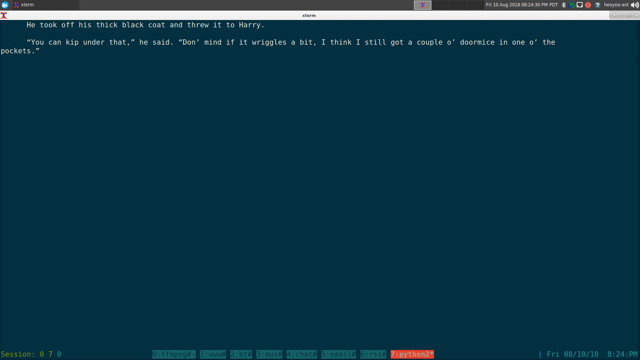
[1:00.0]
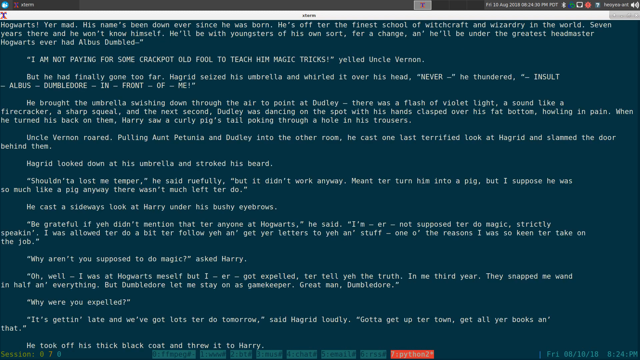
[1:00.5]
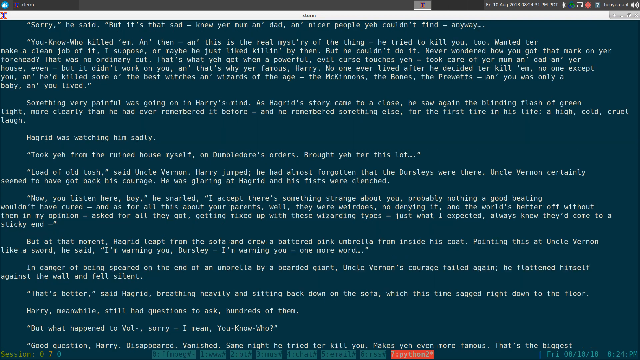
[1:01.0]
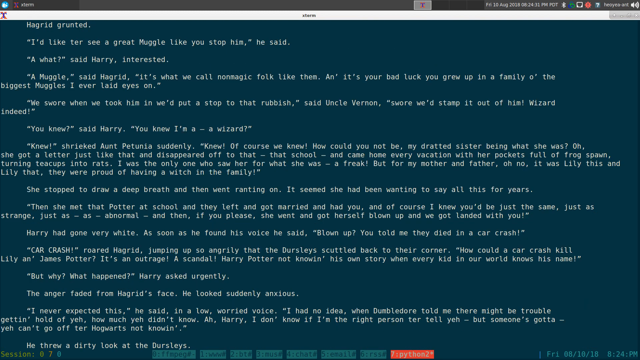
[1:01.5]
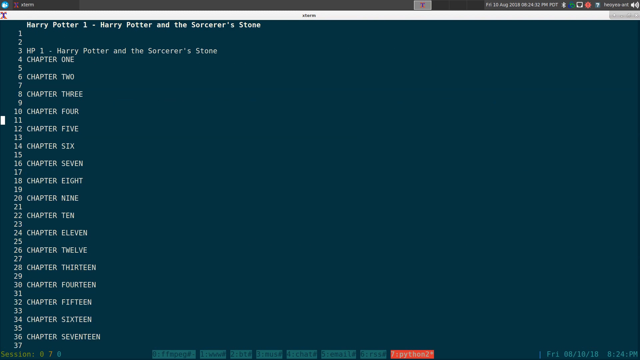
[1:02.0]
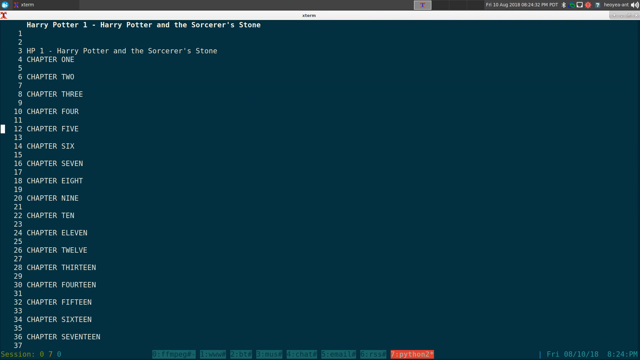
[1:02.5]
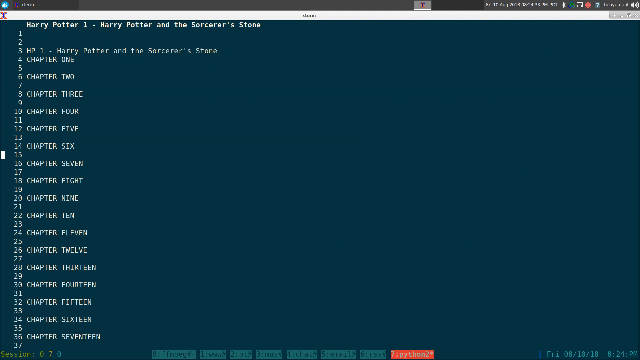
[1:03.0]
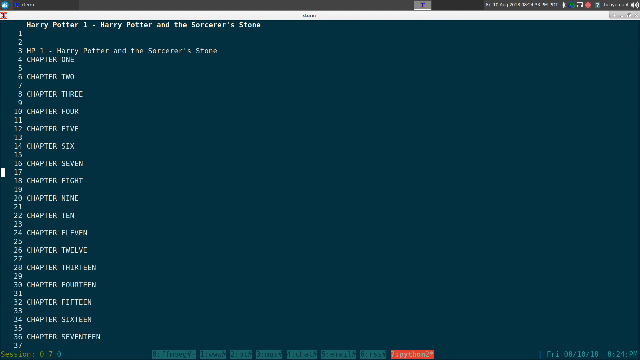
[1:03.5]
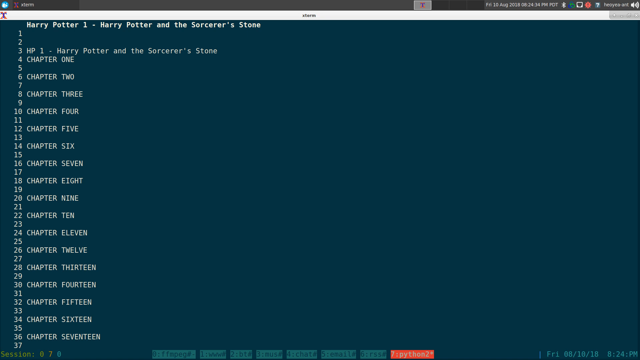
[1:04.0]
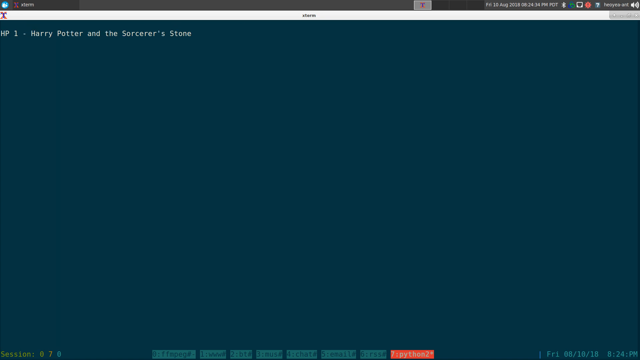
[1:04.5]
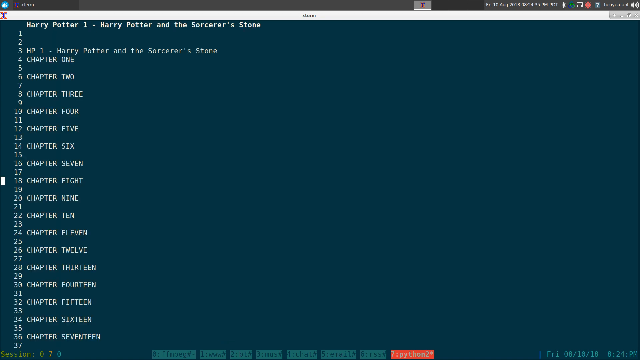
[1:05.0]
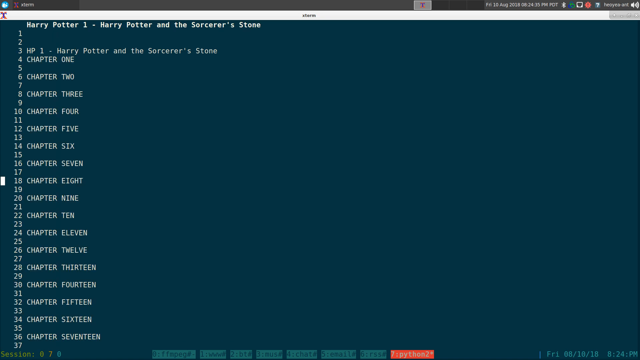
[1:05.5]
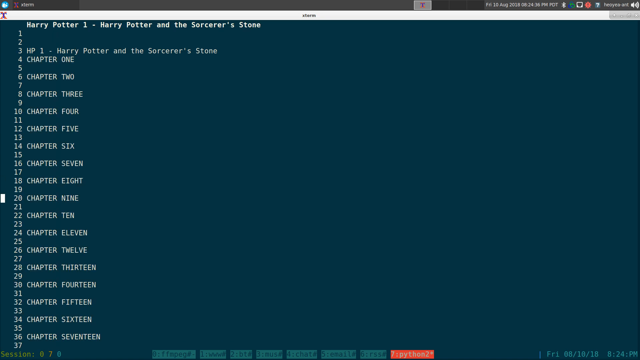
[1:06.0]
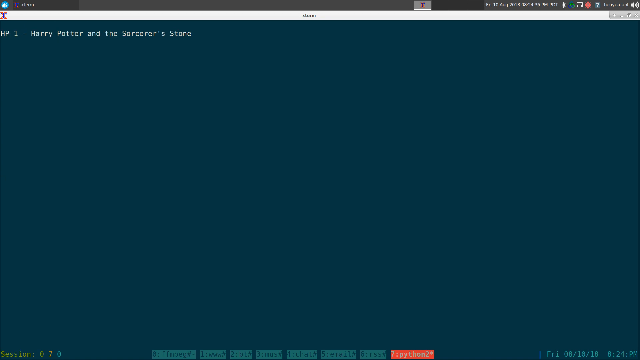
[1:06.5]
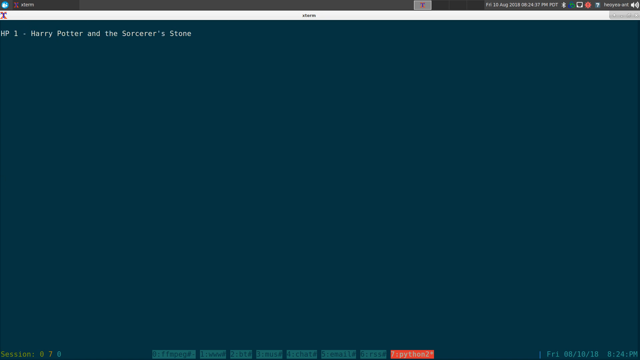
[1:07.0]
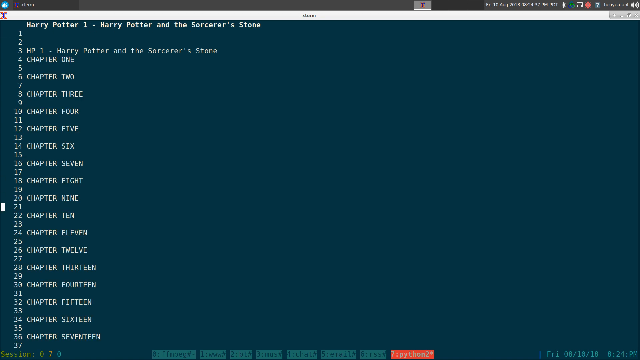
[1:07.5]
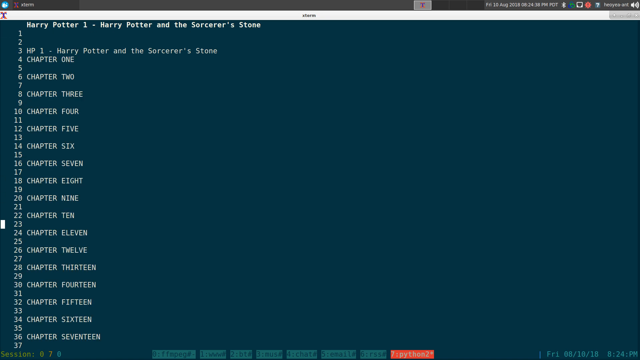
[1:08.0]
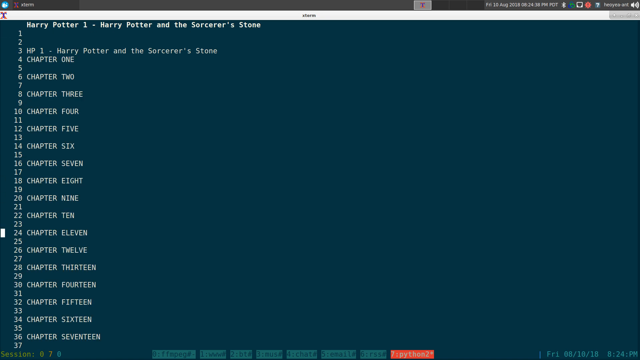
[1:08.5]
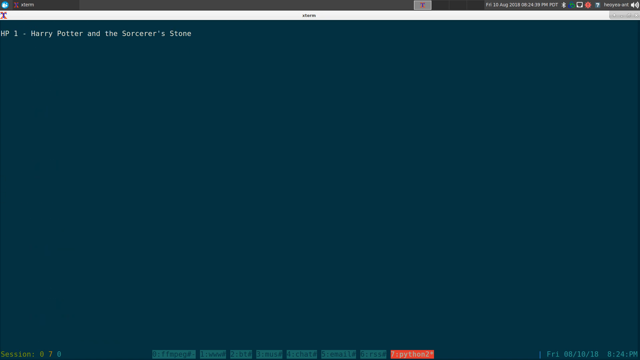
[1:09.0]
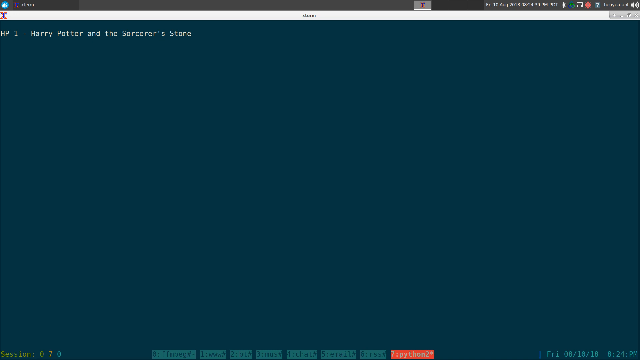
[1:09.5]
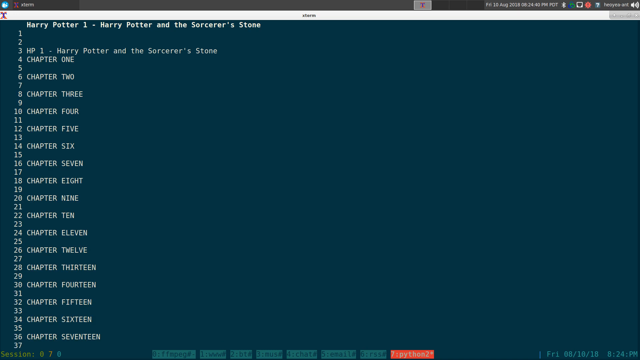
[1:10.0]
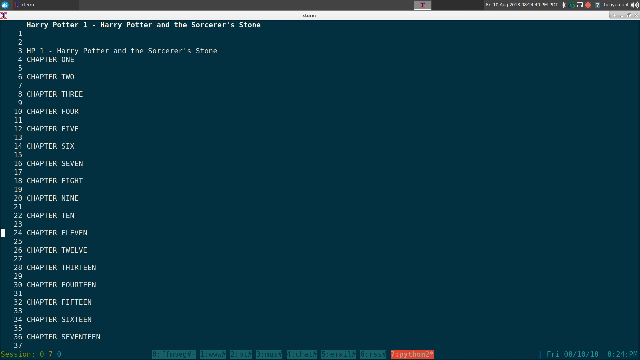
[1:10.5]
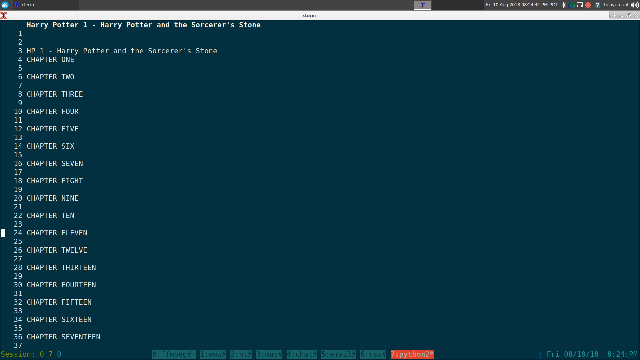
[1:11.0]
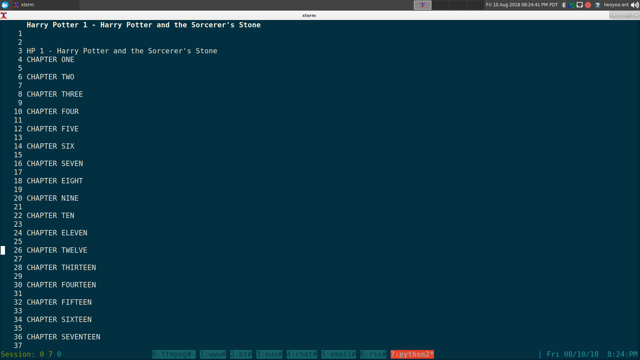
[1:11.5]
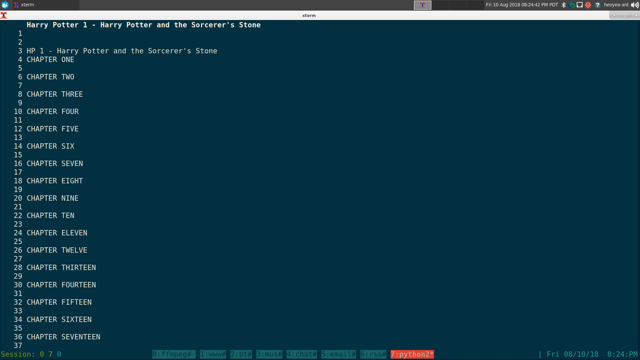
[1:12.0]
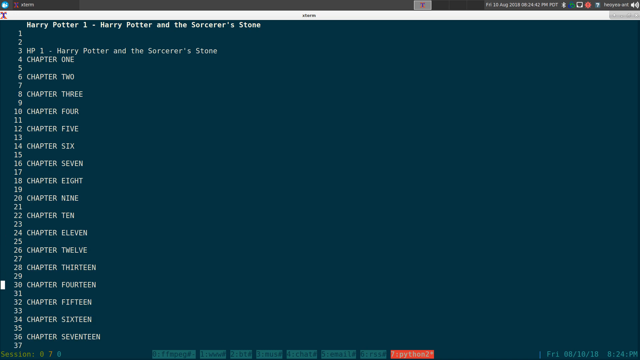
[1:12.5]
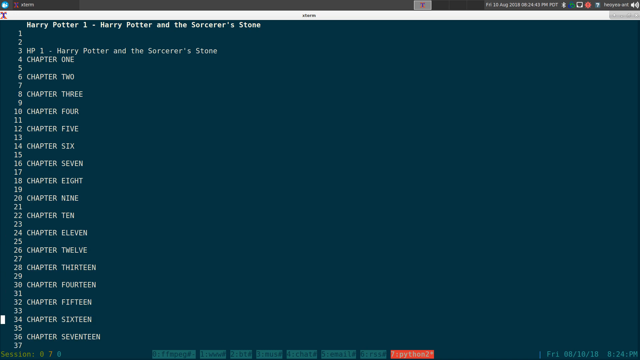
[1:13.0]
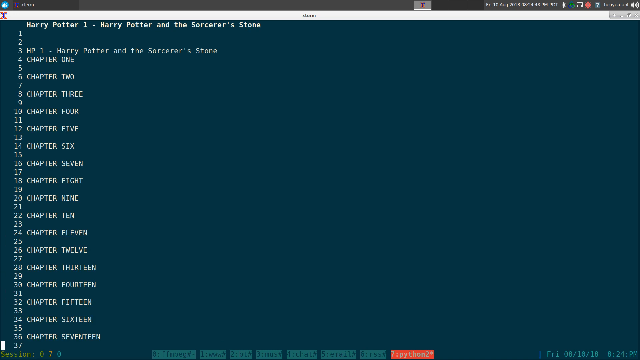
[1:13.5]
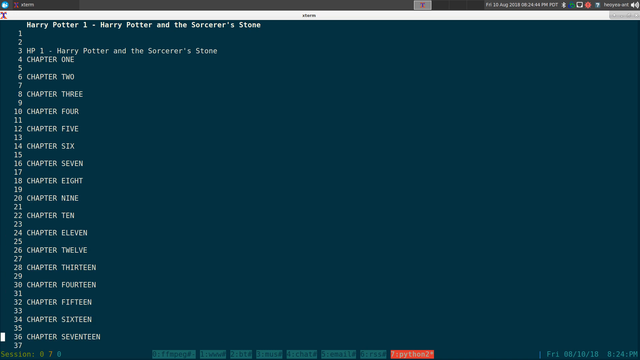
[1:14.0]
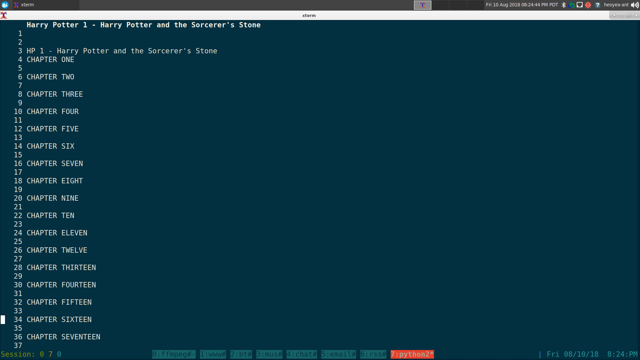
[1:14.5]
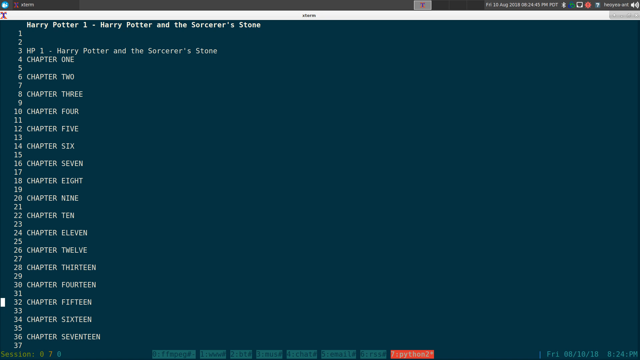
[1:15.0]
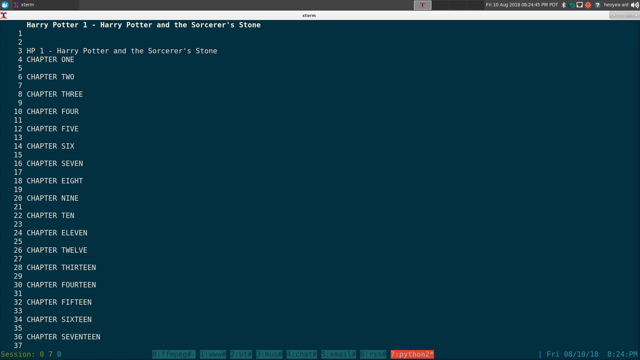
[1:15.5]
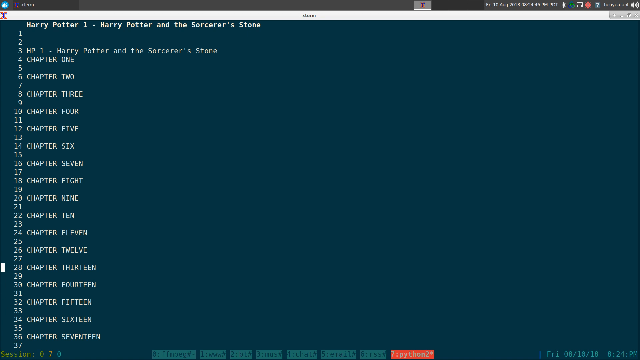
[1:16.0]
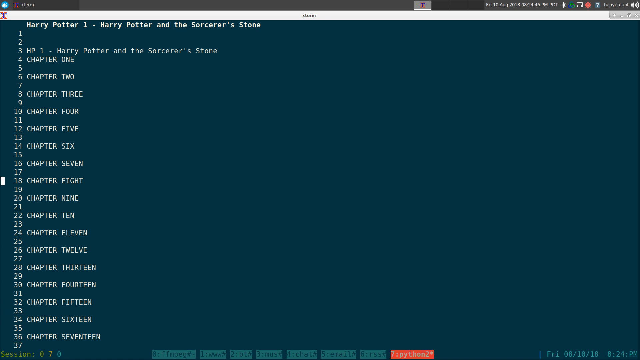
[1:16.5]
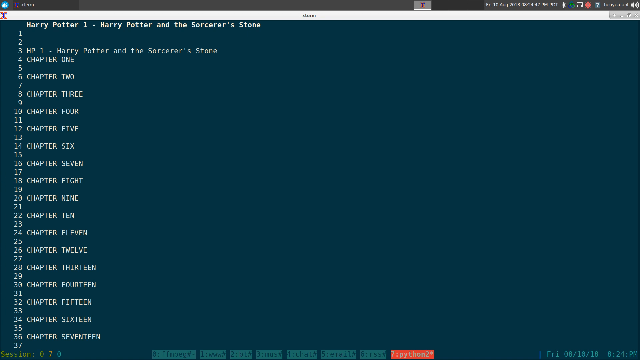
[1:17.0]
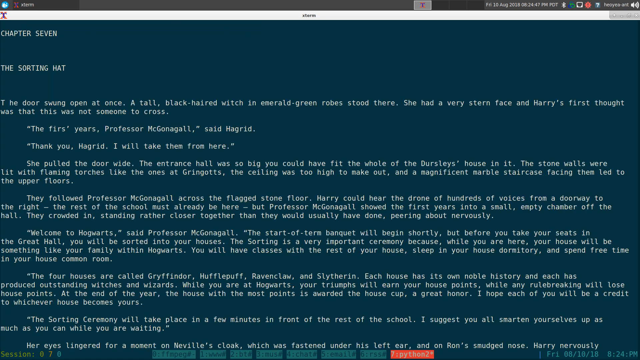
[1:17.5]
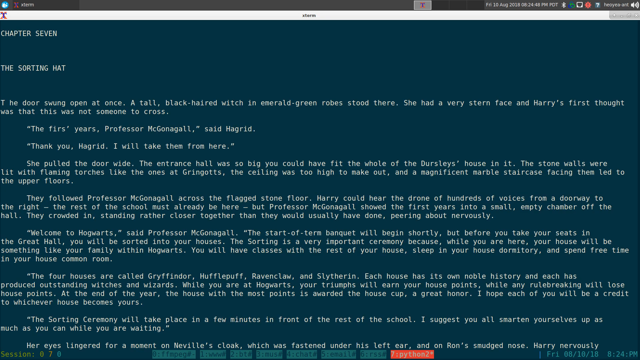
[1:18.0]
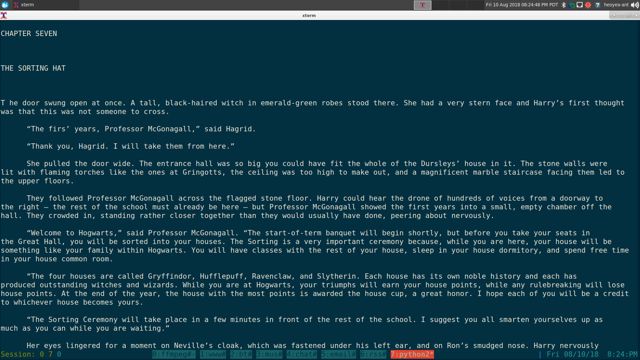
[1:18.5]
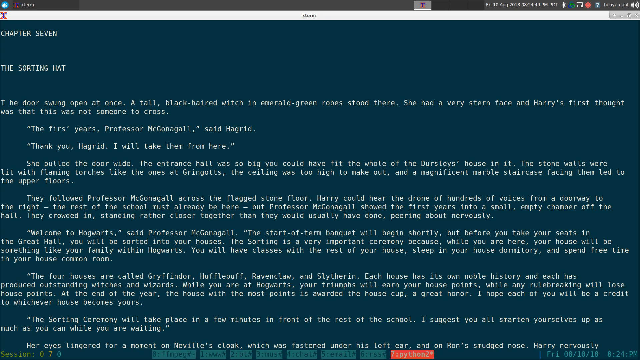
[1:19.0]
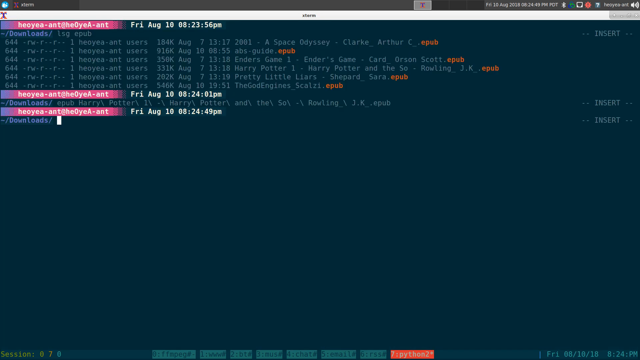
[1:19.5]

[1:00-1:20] The user scrolls to the end of the chapter and leaves it, then clicks on chapter 8, which shows only the name of the book, and exits. Chapter 9 shows the same thing with nothing in it, and so does chapter 11. The user then goes to chapter 7 but clicks the space after it, which opens the chapter so the book can be read; it starts with "the Sorting Hut". Afterward they seem to exit the book, as it disappears and the main terminal screen returns, again prompting for a command in the downloads folder. The time is now 8:24 p.m. At each command, a suggestion to type a command through the insert tag is shown on the right side of the terminal.